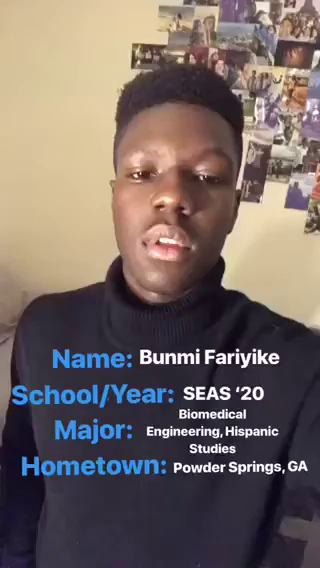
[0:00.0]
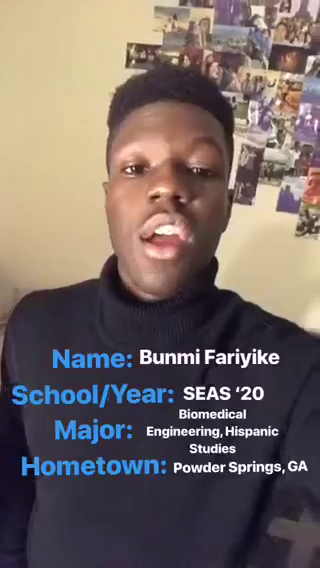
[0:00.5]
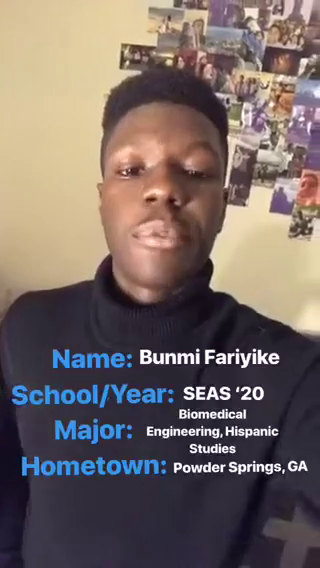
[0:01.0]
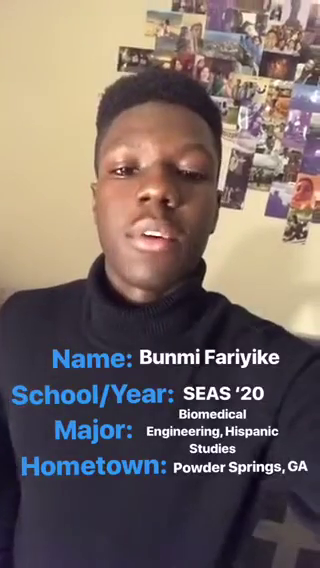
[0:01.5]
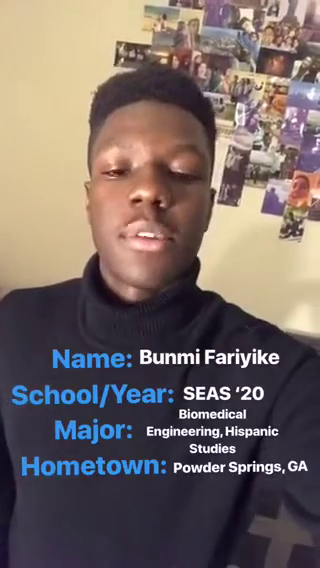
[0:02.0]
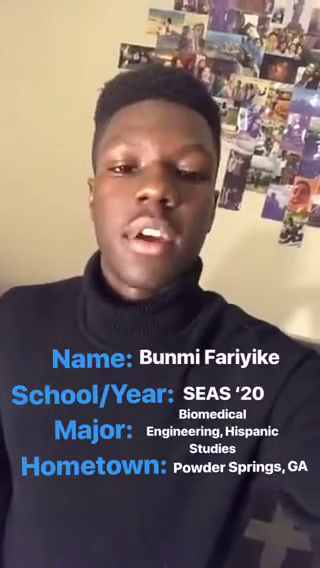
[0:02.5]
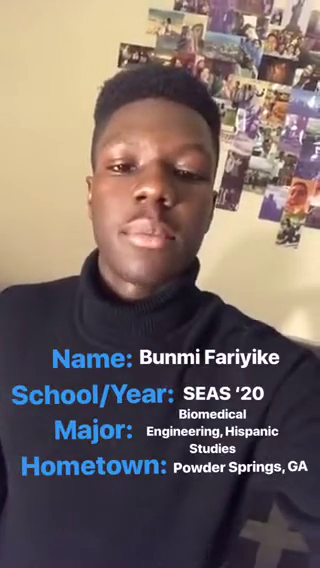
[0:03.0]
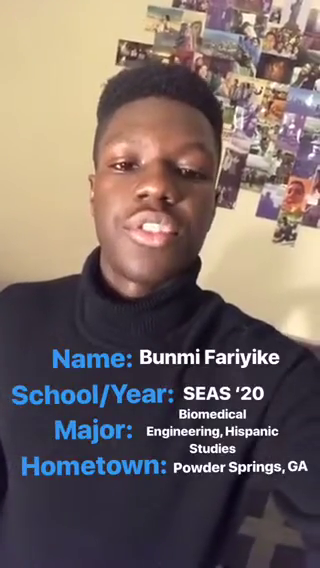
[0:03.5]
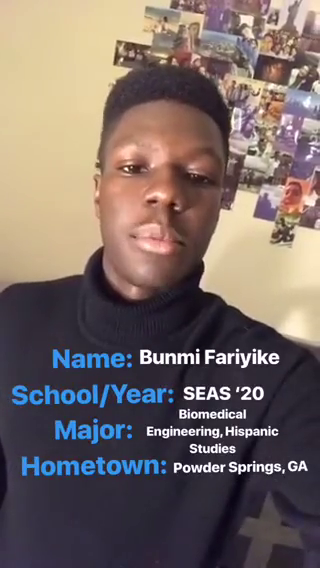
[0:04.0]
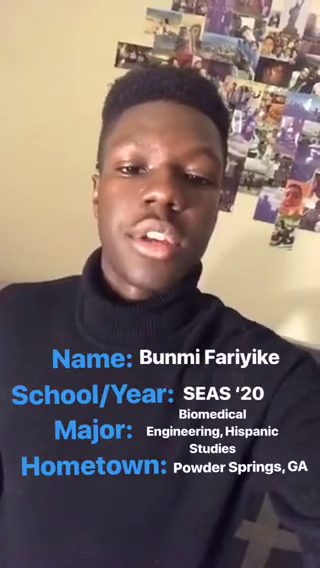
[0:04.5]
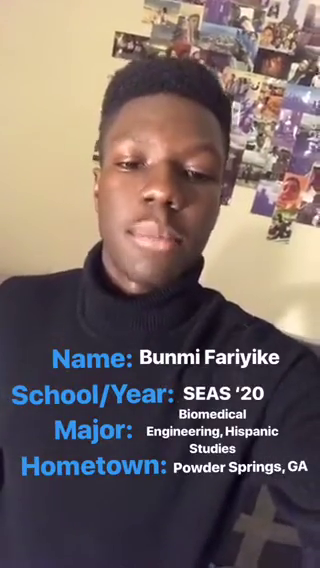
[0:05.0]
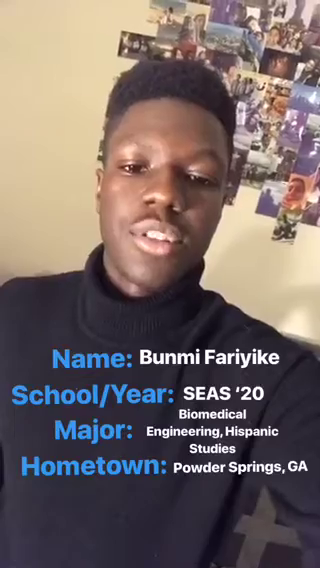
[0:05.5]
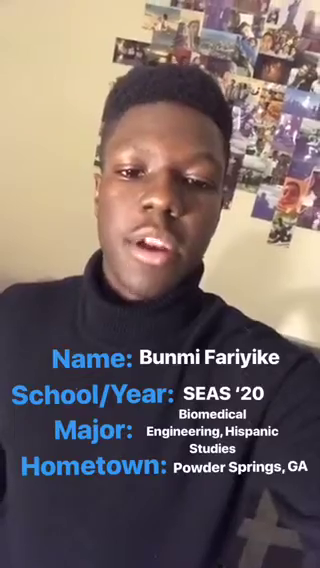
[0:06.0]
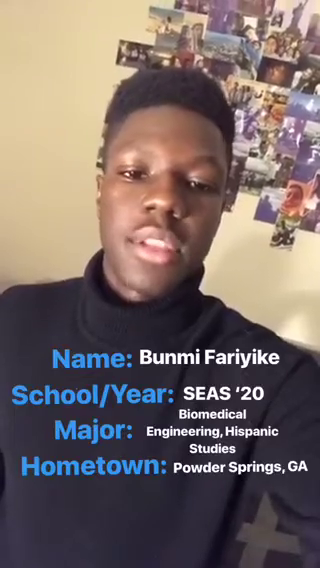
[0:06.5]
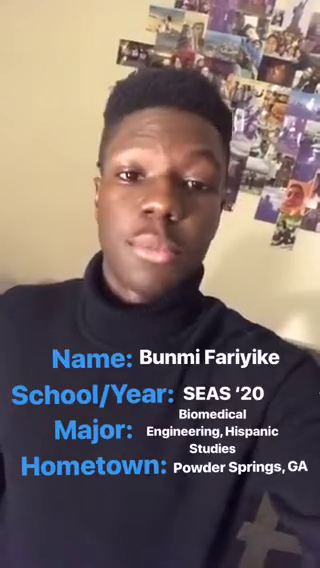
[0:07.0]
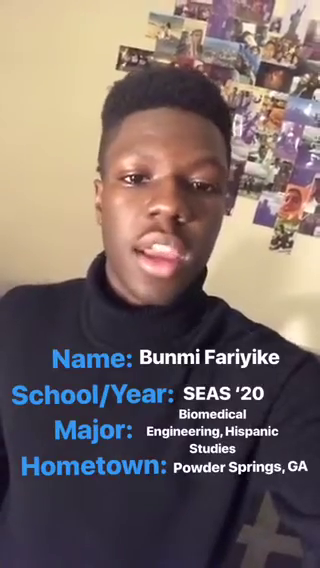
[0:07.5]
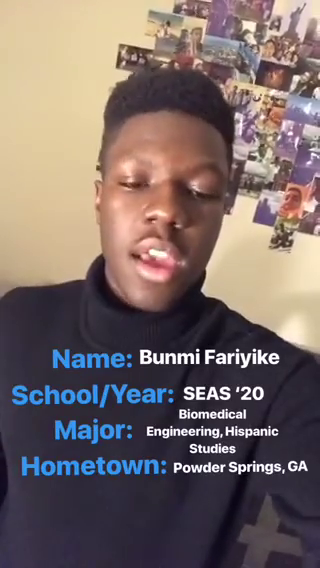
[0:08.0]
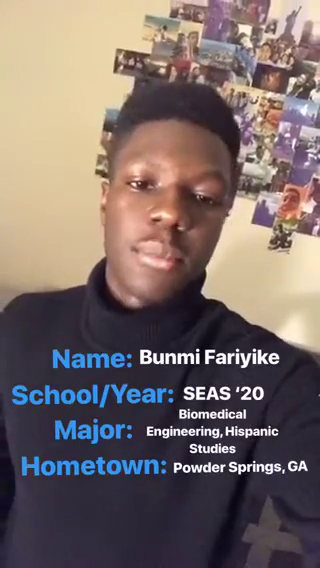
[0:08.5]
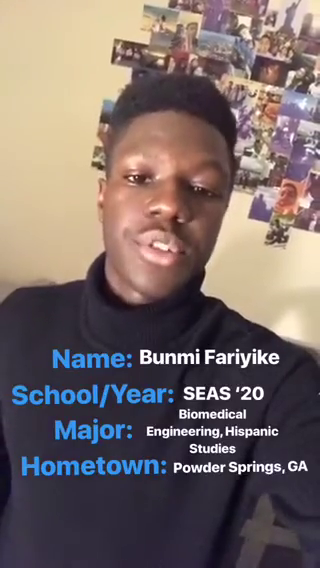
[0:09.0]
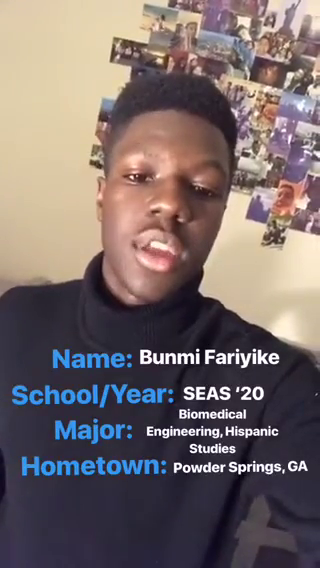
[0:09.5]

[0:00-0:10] A young Black man with black hair cut in an Afro faces the camera and speaks. He wears a black polo neck and appears to be in his early 20s. Text gives his details: "Unmi Fayerike, school Oye, CS20 Biomedical, major Engineering Hispanic Studies, hometown Powder Springs, GA." Behind him, snippets of photos are stuck on a green wall, and as he continues to speak he makes gestures with his mouth and face. The background is the inside of a home. He holds a cell phone and records himself with it. His Afro hair is on the top and to the side, and it has been cut down.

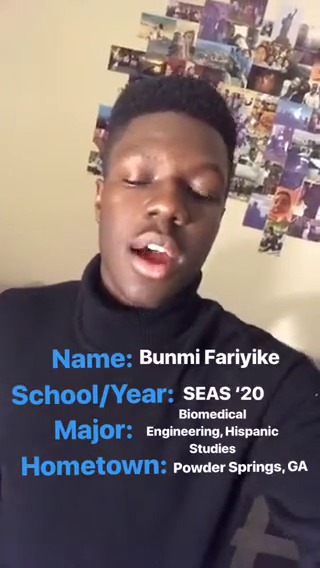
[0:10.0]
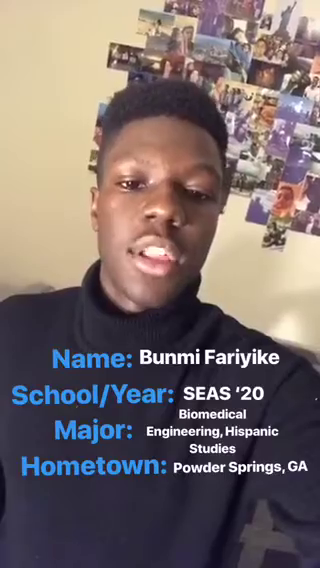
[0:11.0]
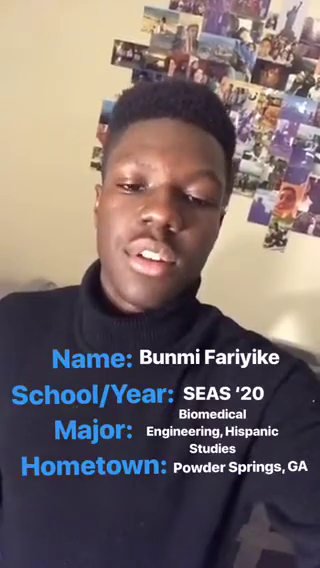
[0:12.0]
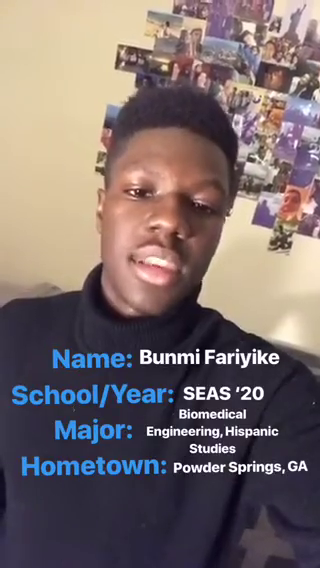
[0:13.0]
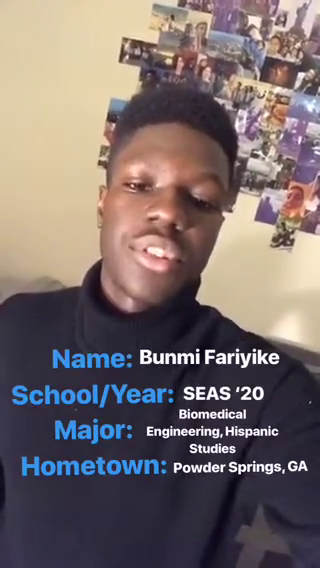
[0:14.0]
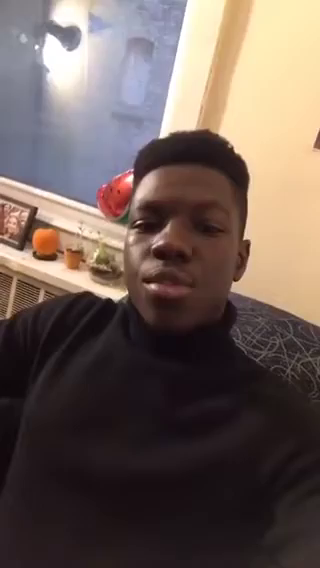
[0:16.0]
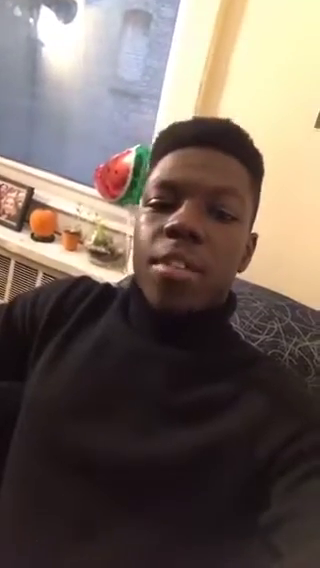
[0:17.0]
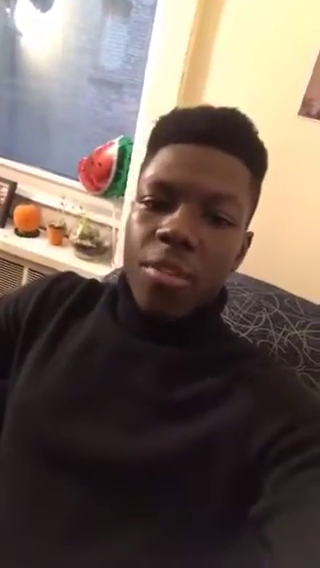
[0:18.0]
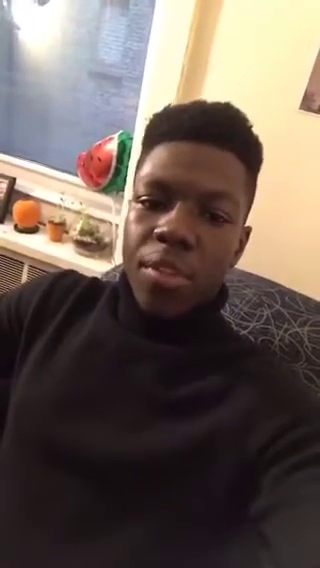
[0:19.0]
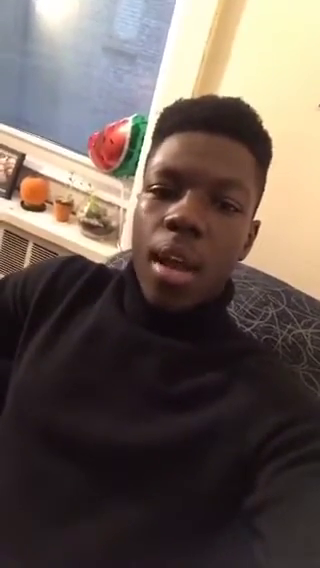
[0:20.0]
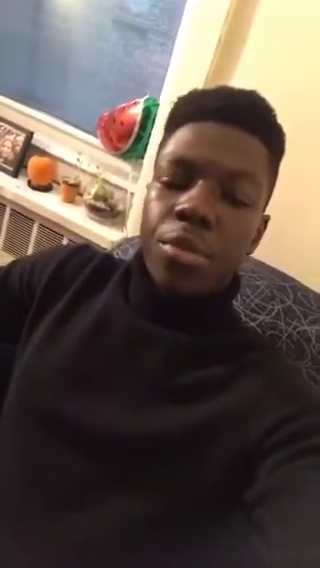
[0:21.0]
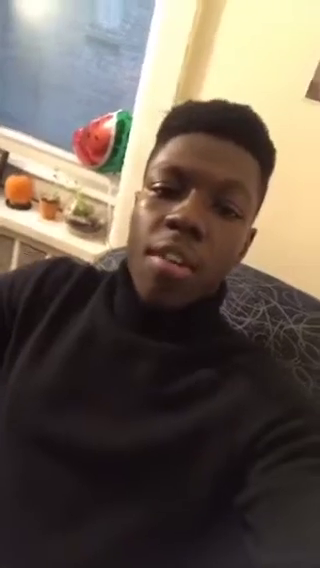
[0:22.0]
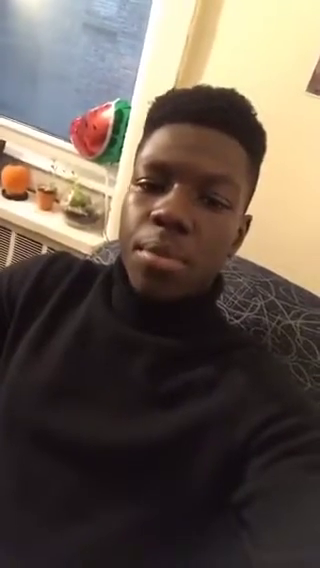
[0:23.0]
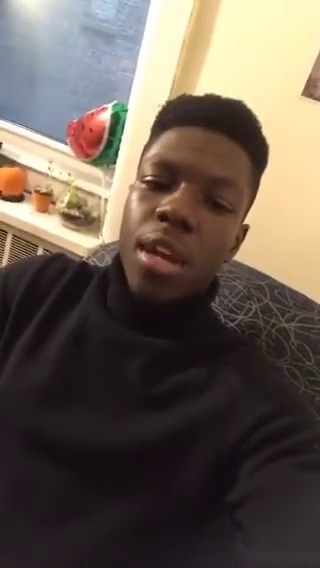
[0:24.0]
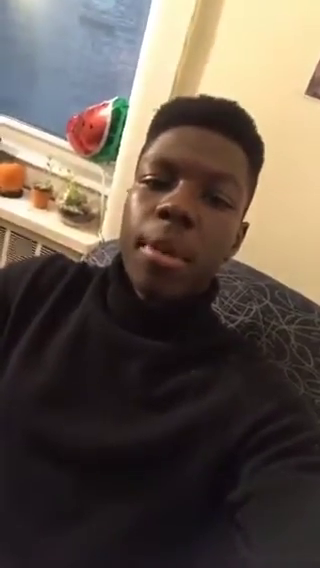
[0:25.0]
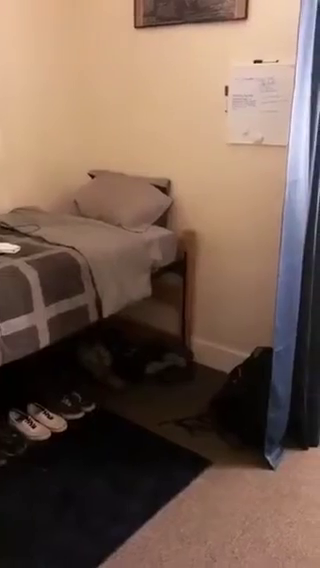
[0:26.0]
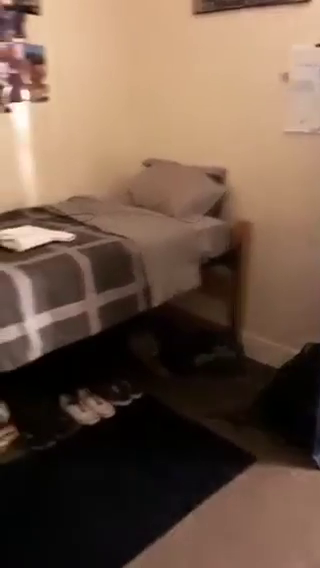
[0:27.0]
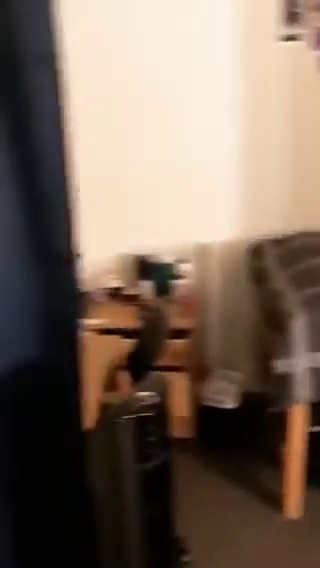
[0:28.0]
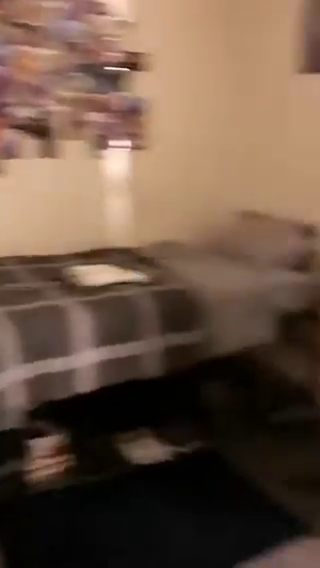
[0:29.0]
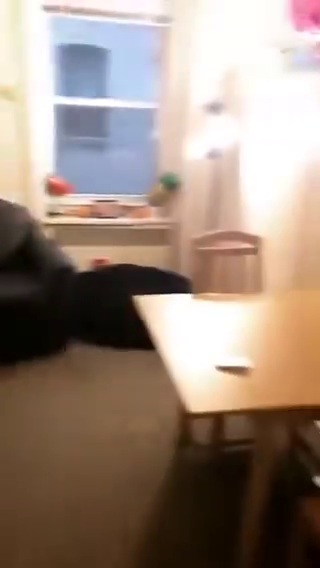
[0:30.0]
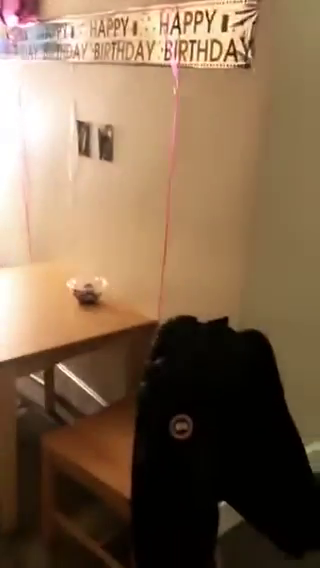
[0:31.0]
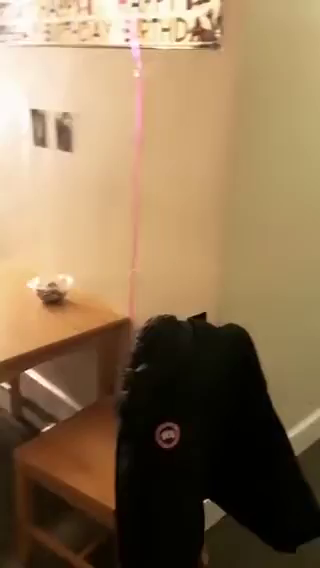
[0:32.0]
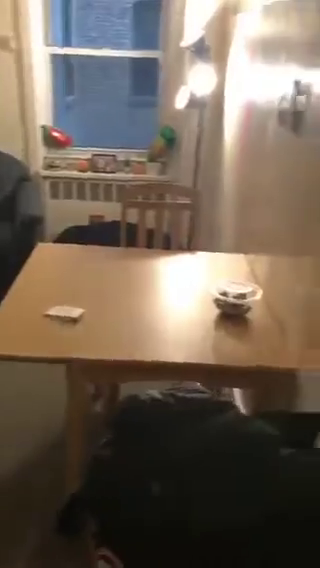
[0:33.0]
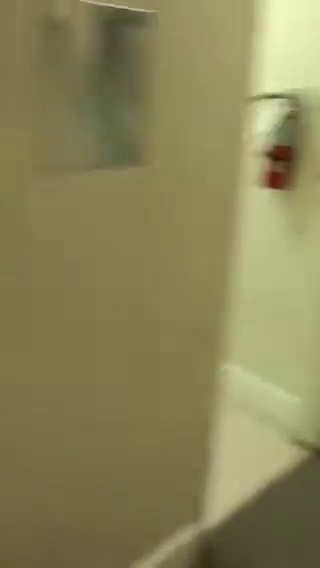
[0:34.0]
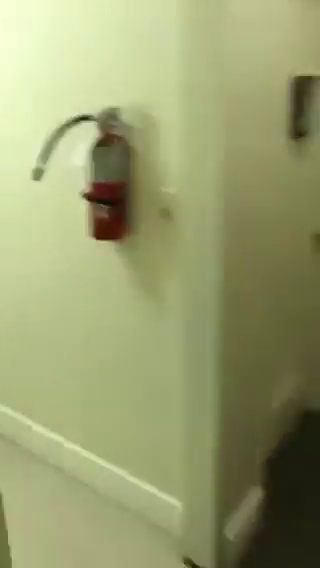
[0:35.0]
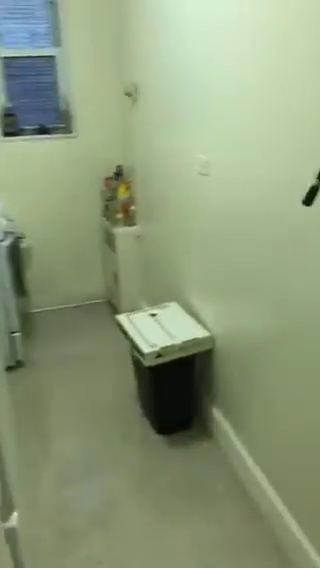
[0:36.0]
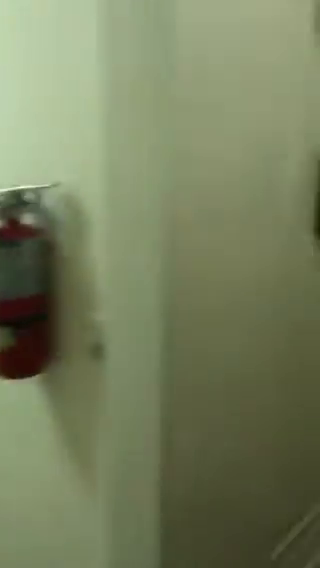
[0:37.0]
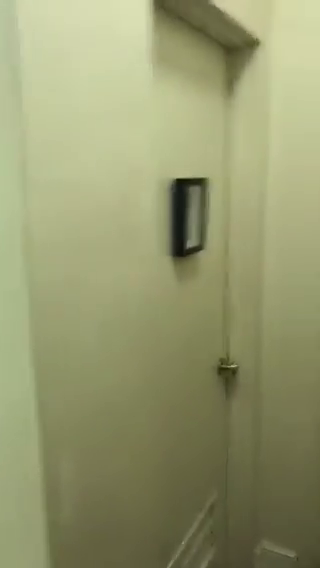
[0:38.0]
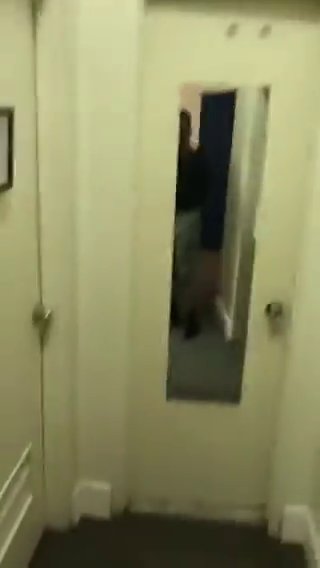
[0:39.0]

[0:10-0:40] The young man continues to talk while holding his phone to record. He wears a black polo neck and is in his early 20s. The background is inside the home, a clean setting, with many small snippets of pictures on the wall. Text gives his name as "Funmi Fahirike", with "school Oye" written in blue, followed by "CS20 Biomedical", a major in "Engineering Hispanic Studies", and hometown "Powder Springs, GA". The setting then changes: he is sitting in a dining room setting on a gray sofa with white lines. In the background there is a cream setting to the right, and to the left there is a kitchen countertop. A page and a cup of coffee are on the table. He then records his bedroom, showing a brown blanket with scorched lines, brown bedding, shoes underneath the brown bedding, and a small carpet.